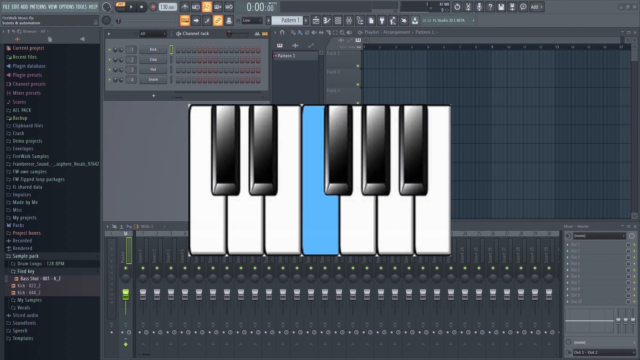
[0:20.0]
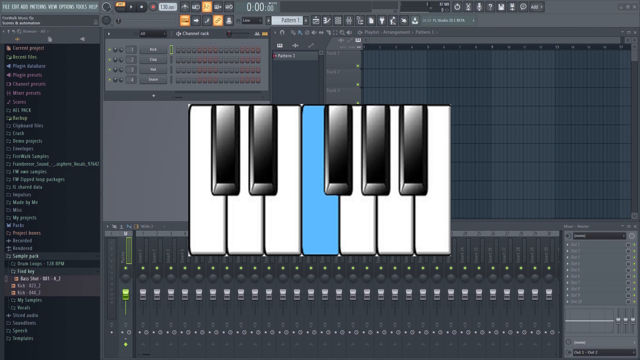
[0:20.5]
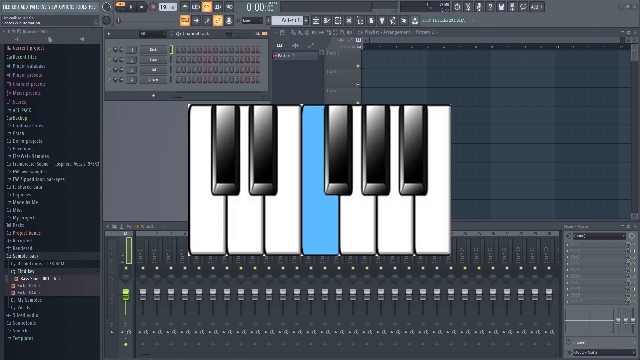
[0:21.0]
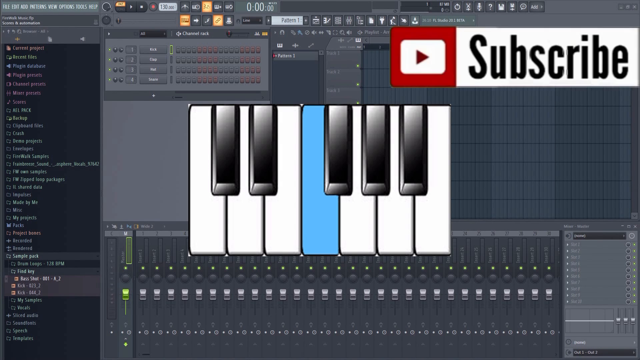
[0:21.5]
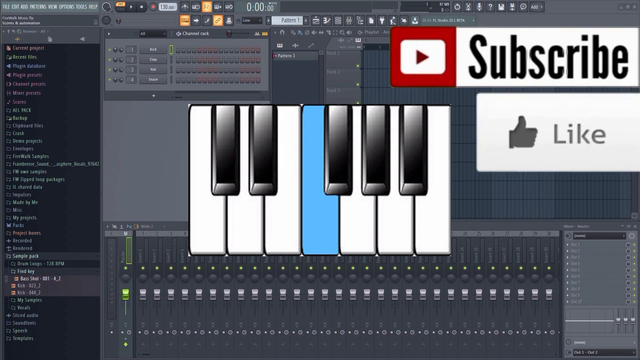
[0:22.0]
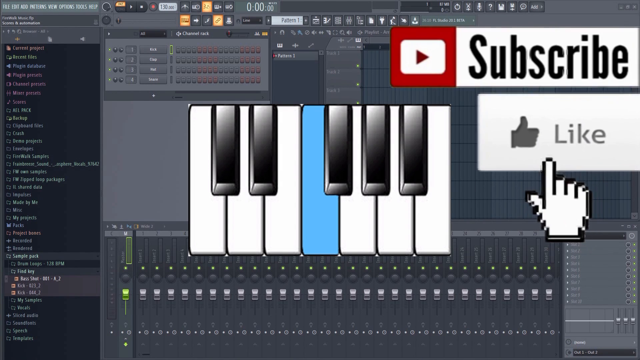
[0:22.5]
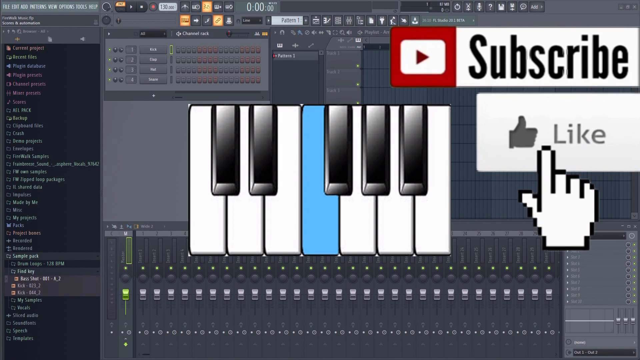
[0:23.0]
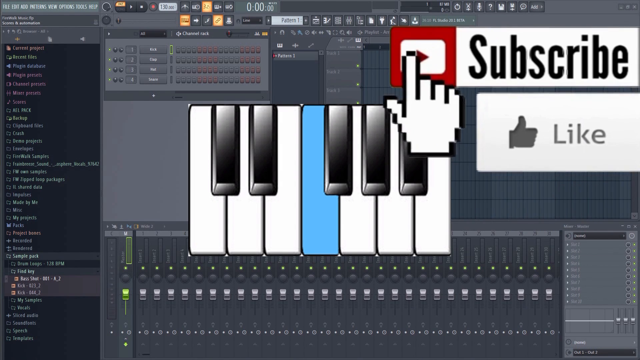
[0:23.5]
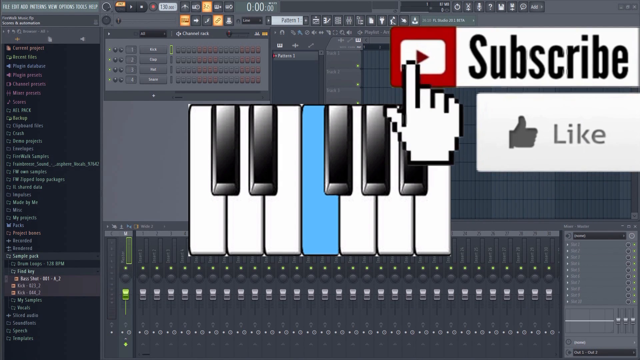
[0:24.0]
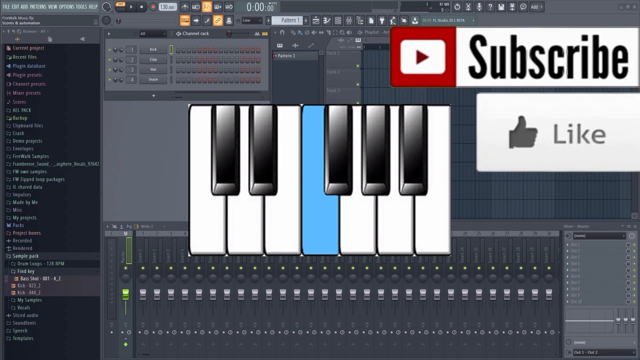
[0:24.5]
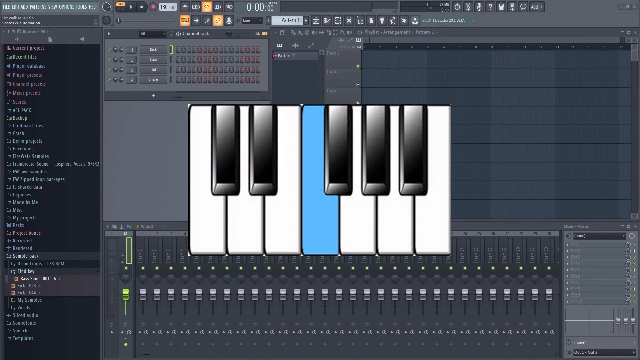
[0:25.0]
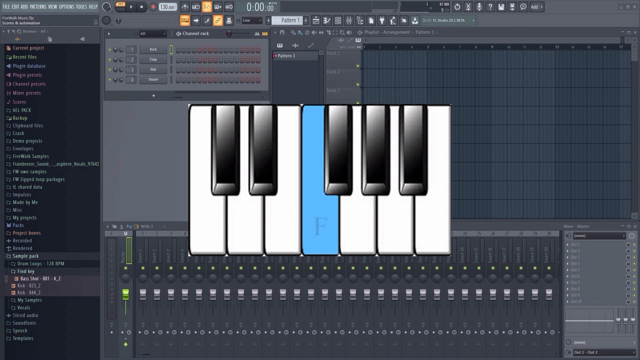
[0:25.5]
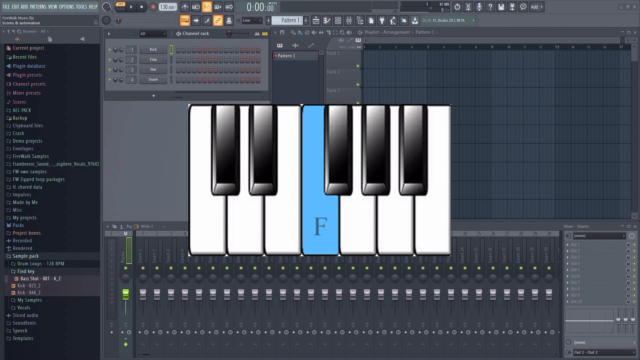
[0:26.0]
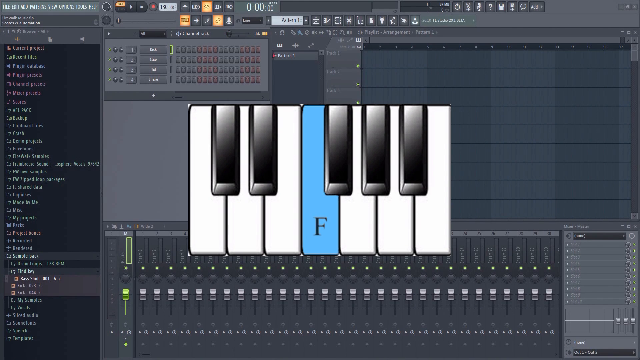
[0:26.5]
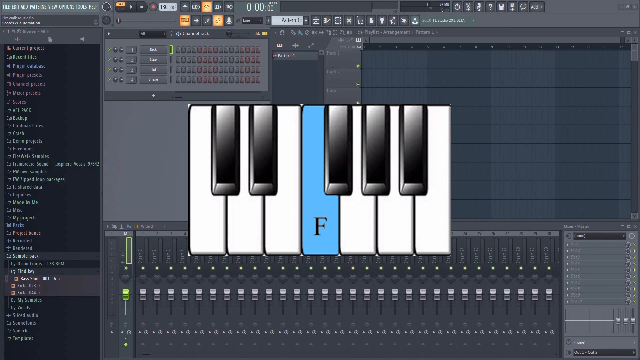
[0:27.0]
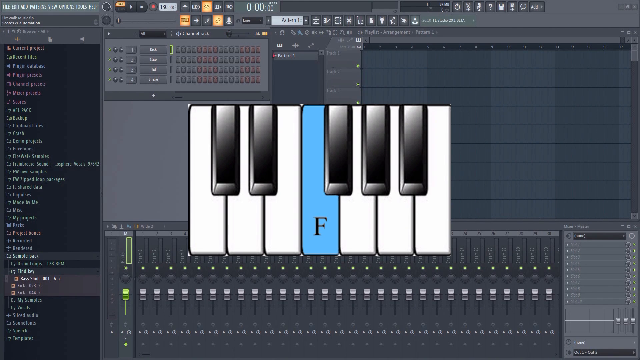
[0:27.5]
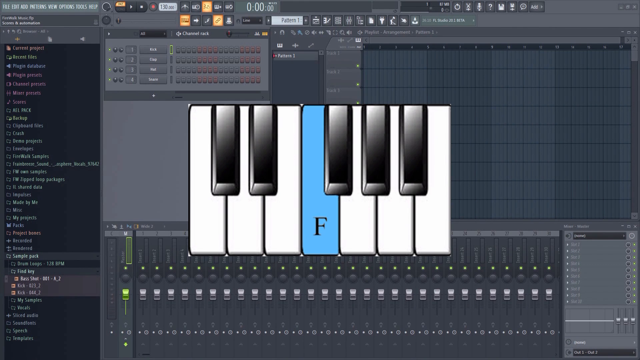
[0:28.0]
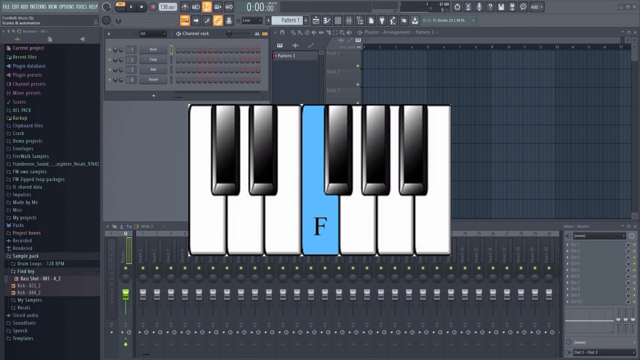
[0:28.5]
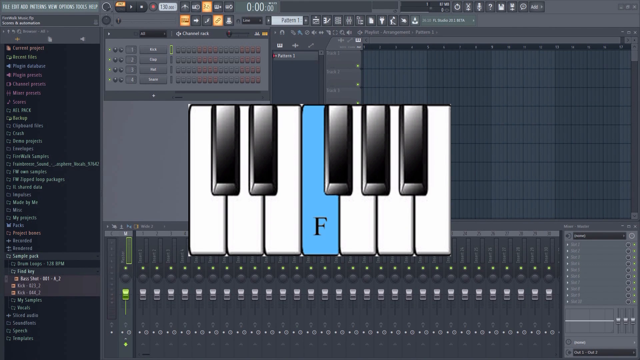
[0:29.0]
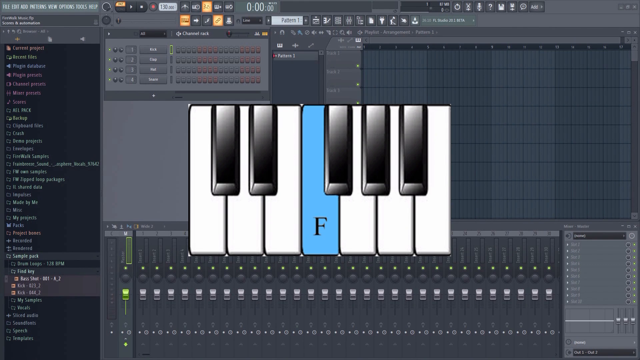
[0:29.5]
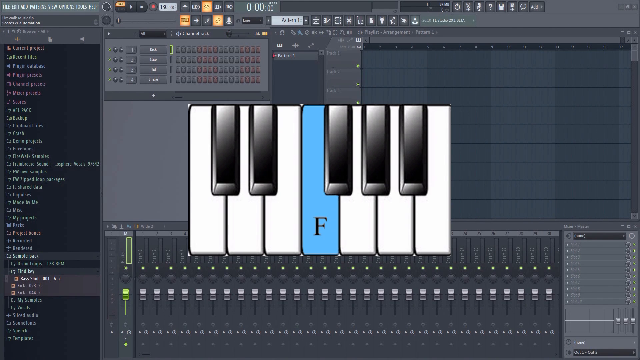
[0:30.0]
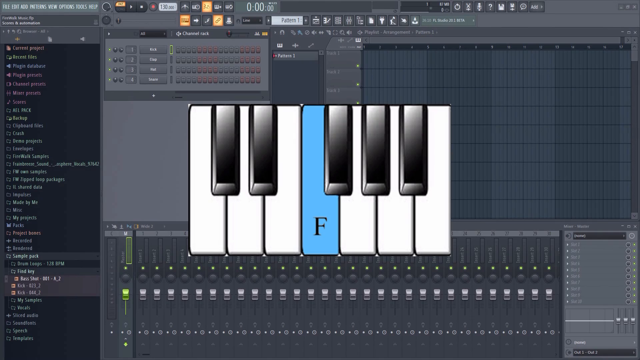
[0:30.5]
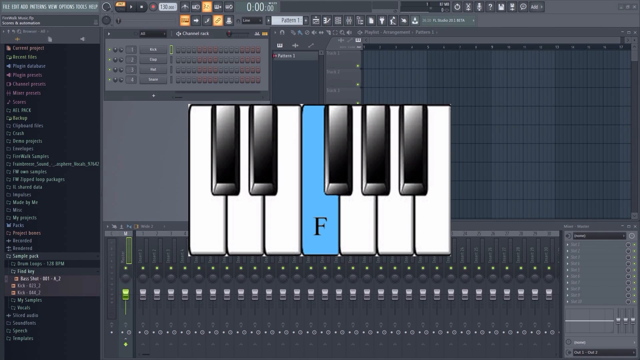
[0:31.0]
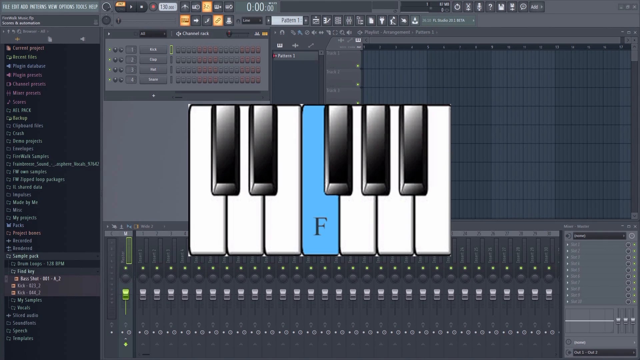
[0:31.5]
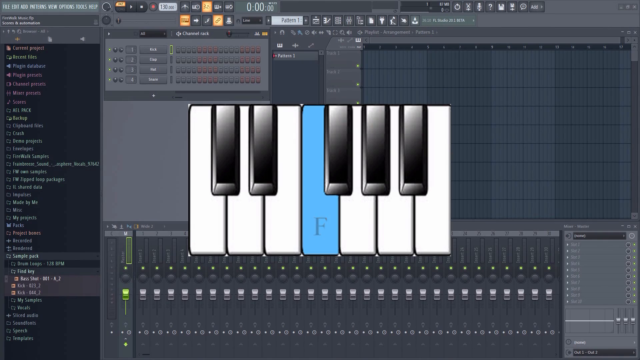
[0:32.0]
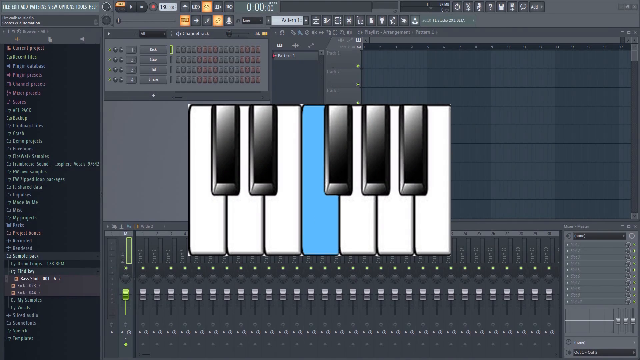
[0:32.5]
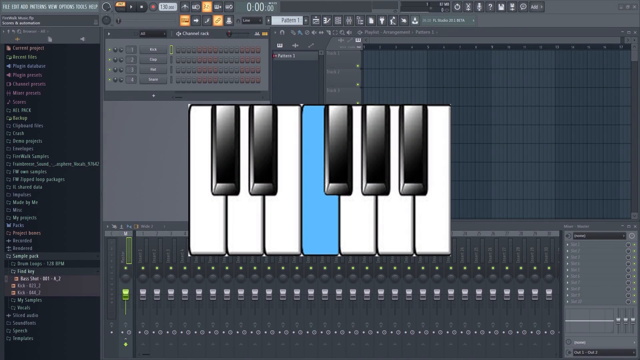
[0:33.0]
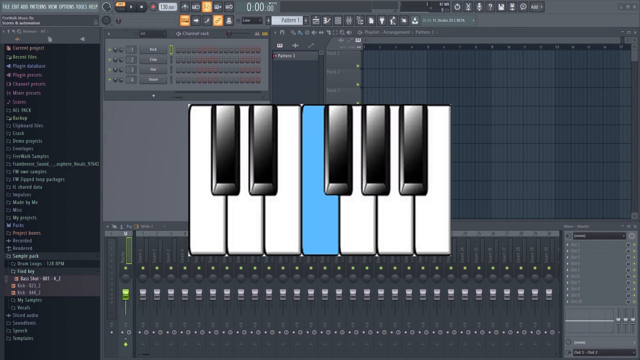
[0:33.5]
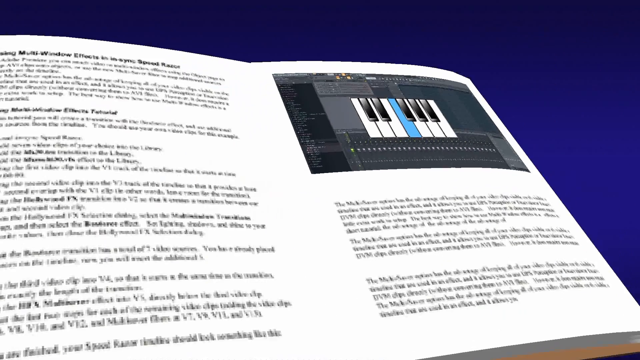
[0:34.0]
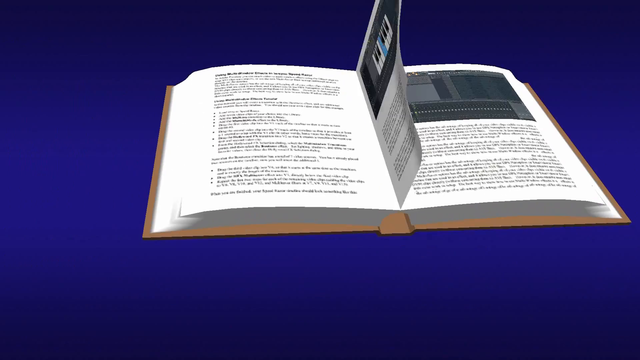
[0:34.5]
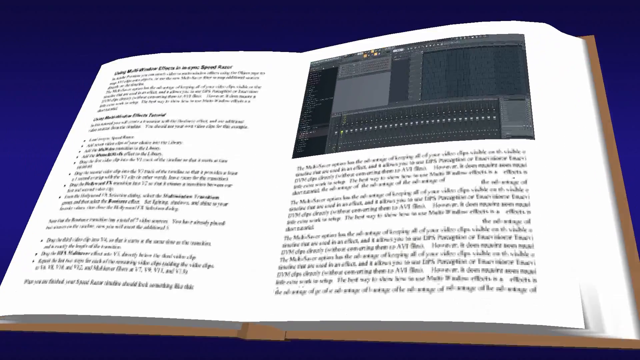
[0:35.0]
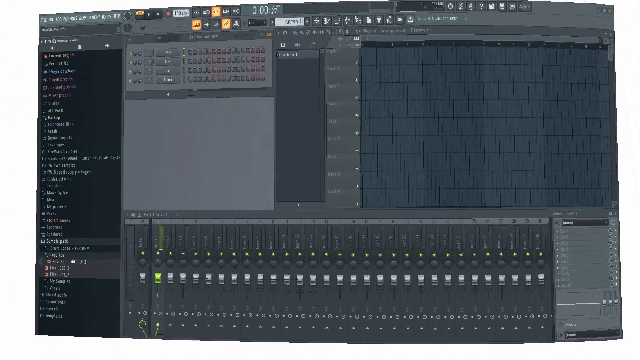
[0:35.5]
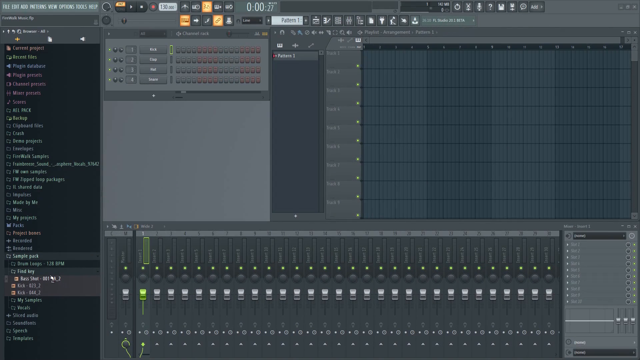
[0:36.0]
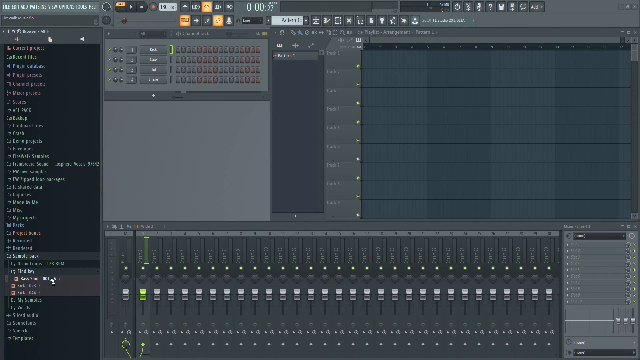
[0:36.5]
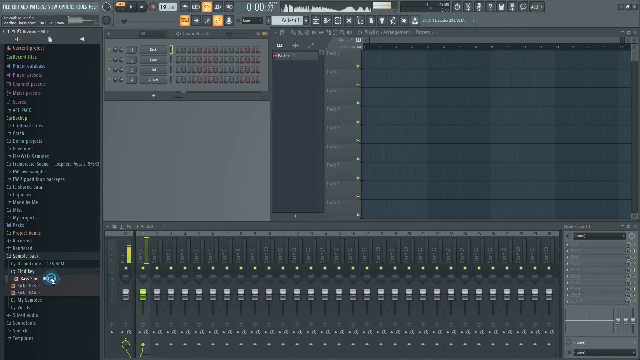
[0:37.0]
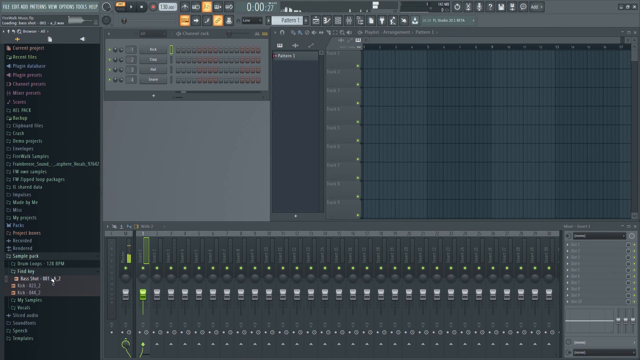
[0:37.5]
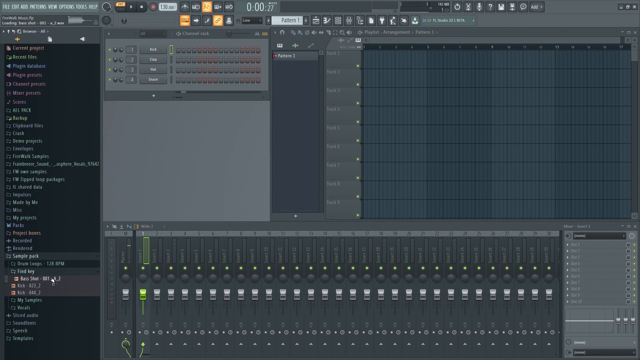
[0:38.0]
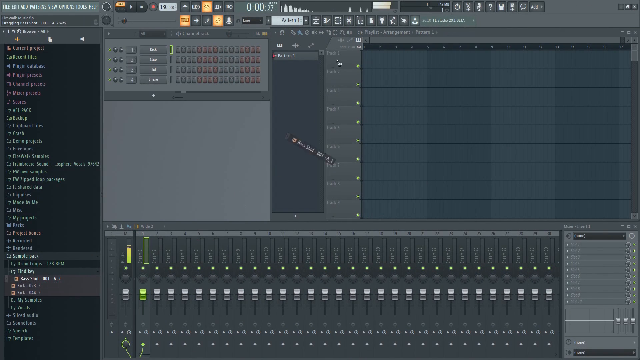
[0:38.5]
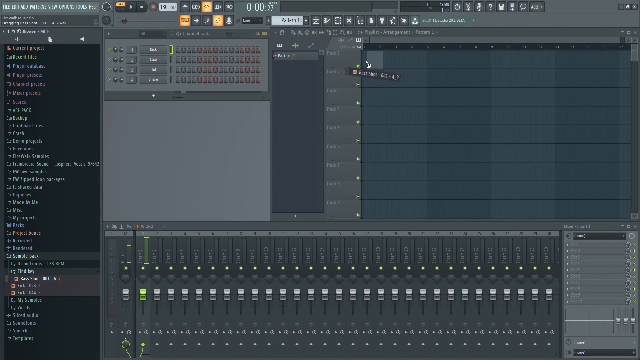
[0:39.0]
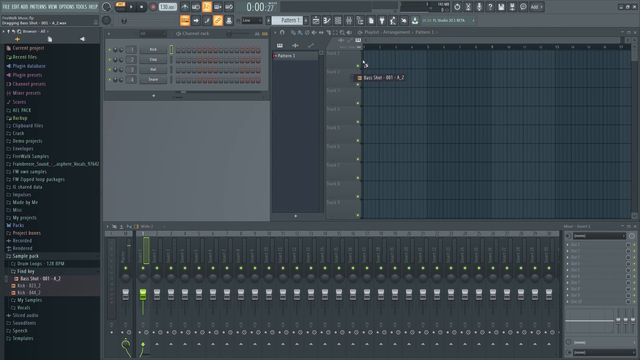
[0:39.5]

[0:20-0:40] What appears to be a software program is shown on someone's computer. Its dominant colors are gray and dark gray, and it appears to have many controls and selections, though everything is too small to make out. In the foreground is an illustrated or cartoonish-looking keyboard, like one from a piano, with black and white keys; one key in the center is light blue. In the top right corner, black text reads "subscribe" and "like," with a little hand over the like button; the hand simulates pressing the like button and then the subscribe button. The scene then changes to an illustrated or cartoonish CGI-type book flipping open to a page in the middle.